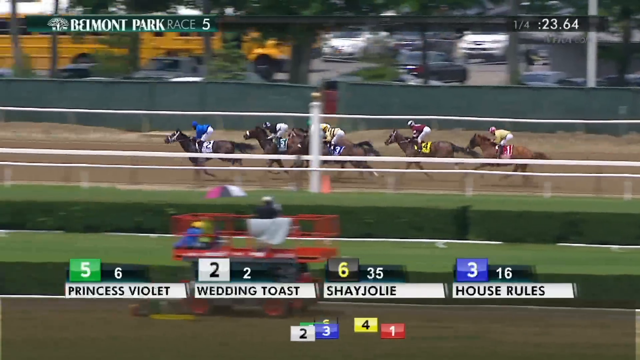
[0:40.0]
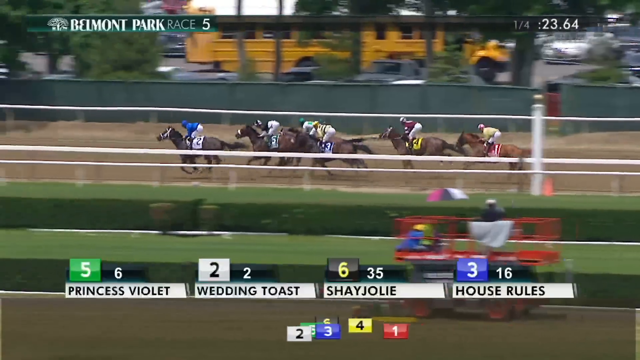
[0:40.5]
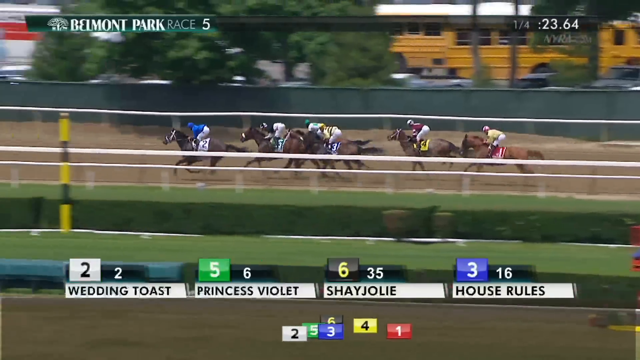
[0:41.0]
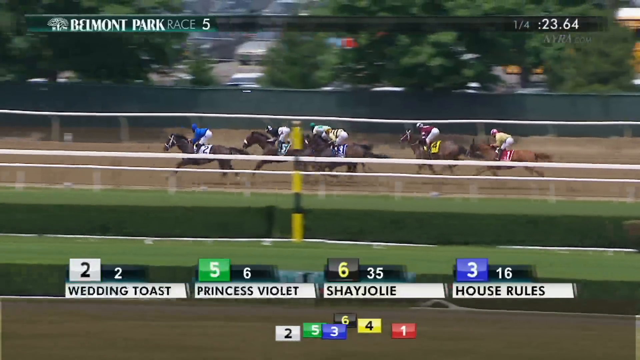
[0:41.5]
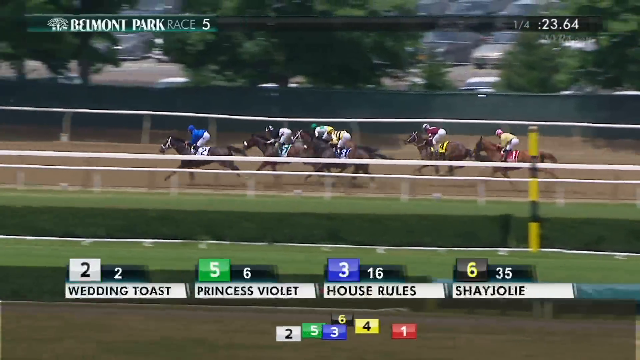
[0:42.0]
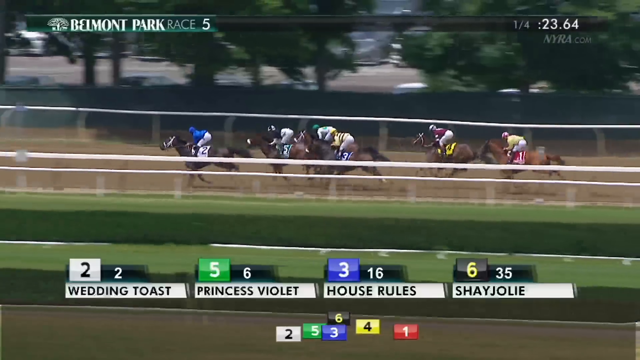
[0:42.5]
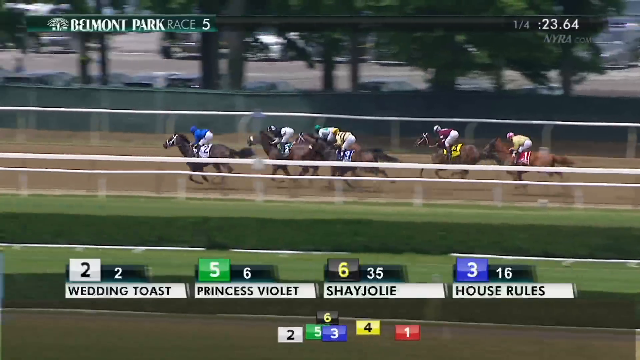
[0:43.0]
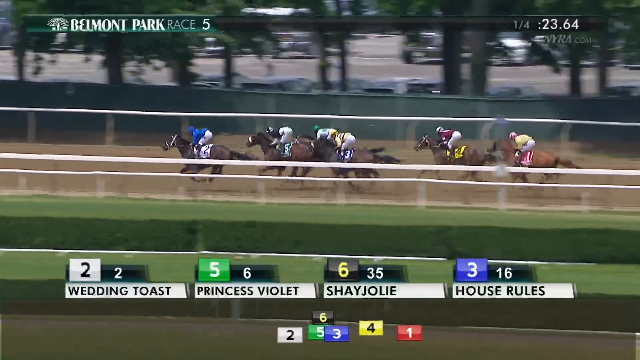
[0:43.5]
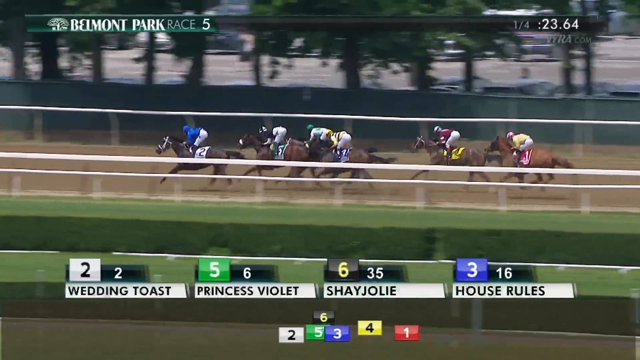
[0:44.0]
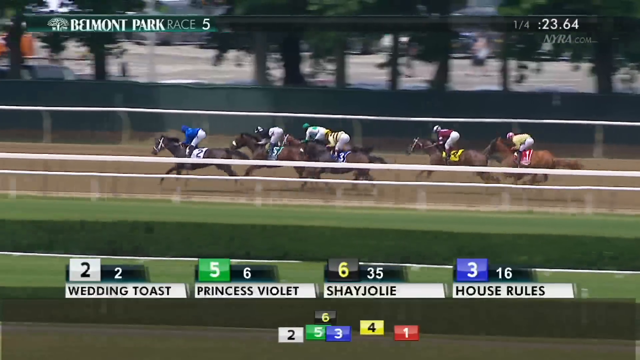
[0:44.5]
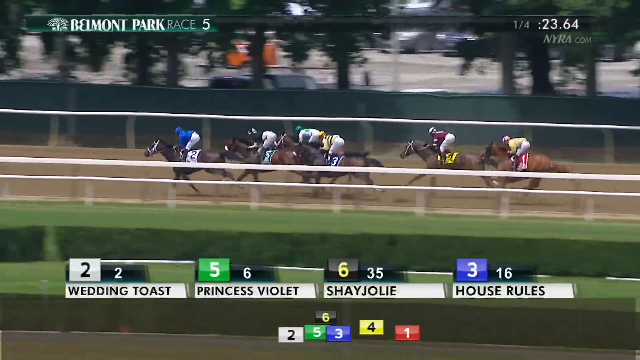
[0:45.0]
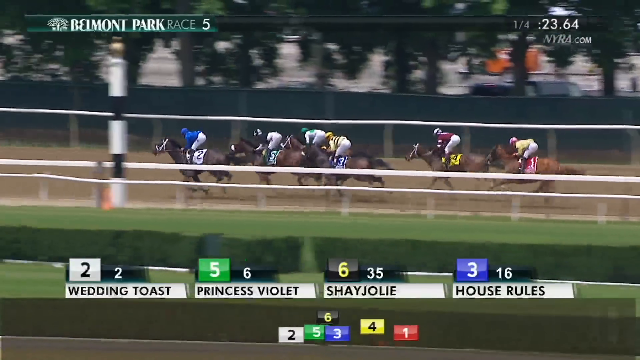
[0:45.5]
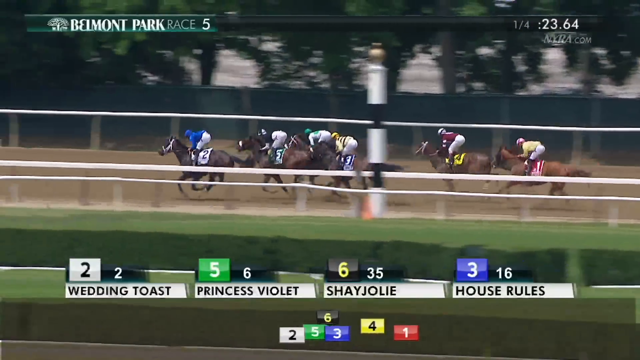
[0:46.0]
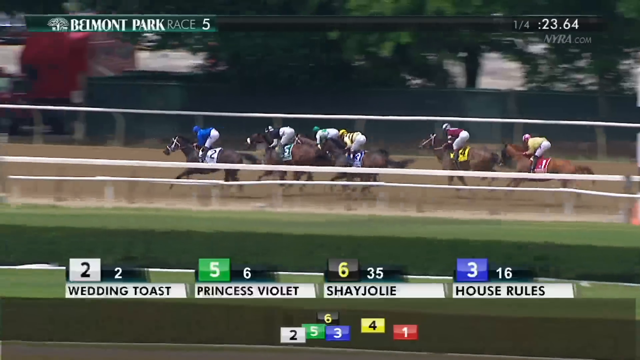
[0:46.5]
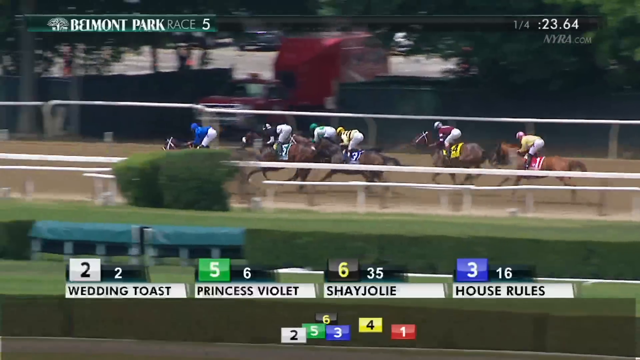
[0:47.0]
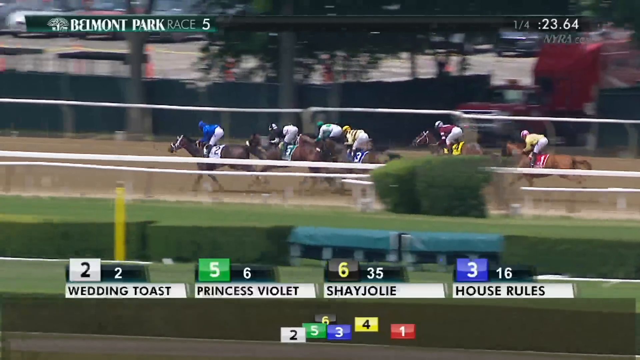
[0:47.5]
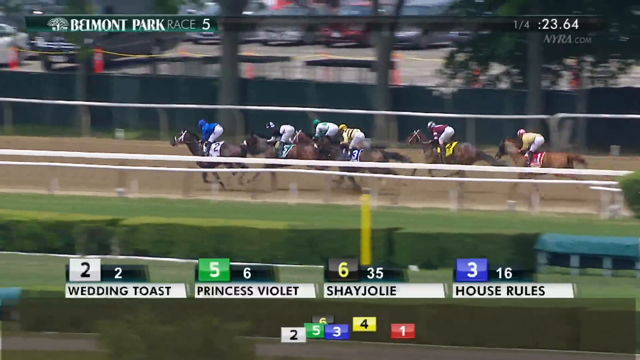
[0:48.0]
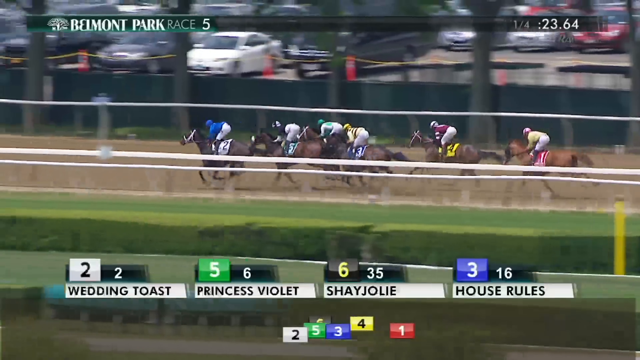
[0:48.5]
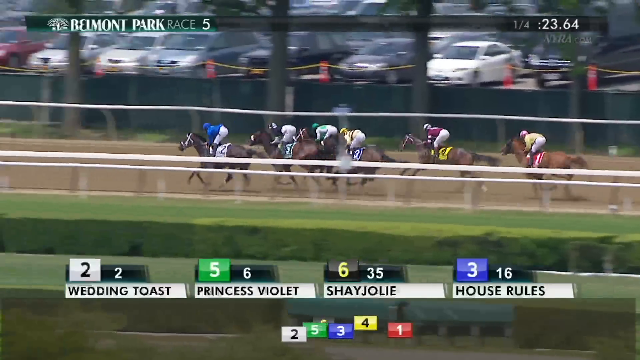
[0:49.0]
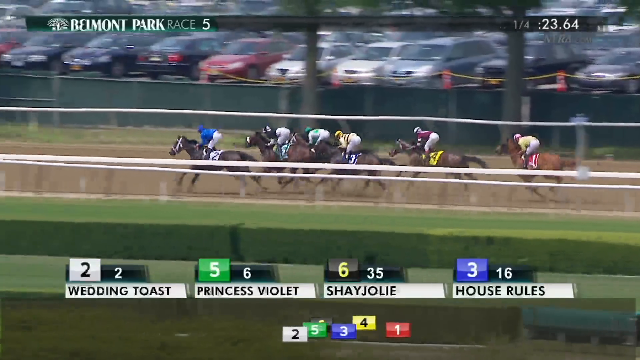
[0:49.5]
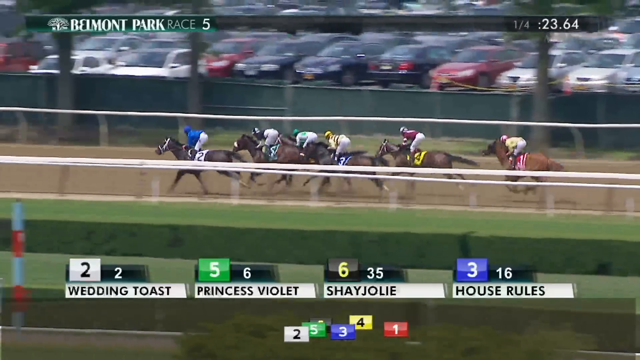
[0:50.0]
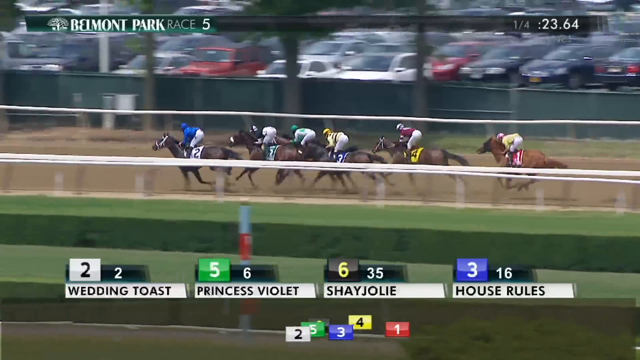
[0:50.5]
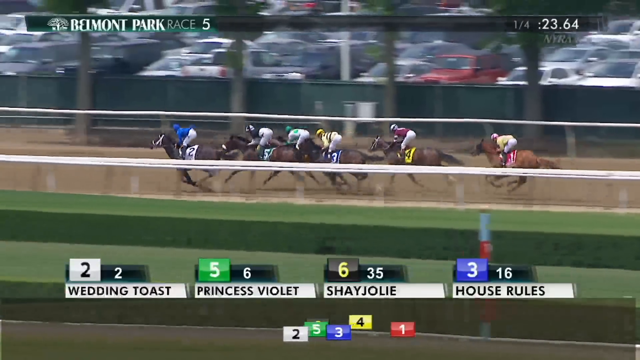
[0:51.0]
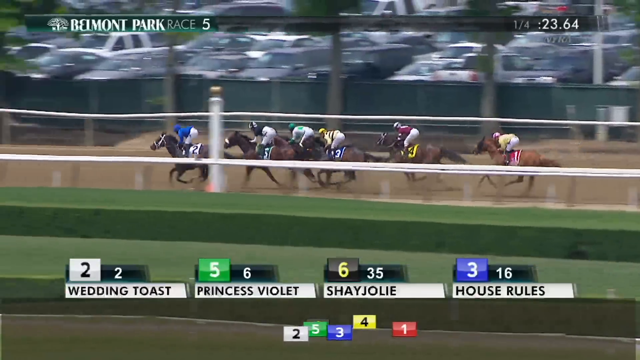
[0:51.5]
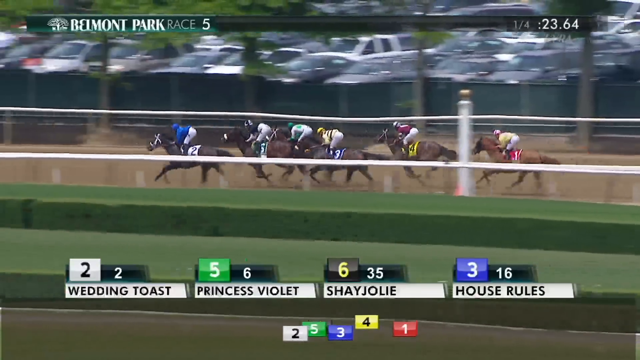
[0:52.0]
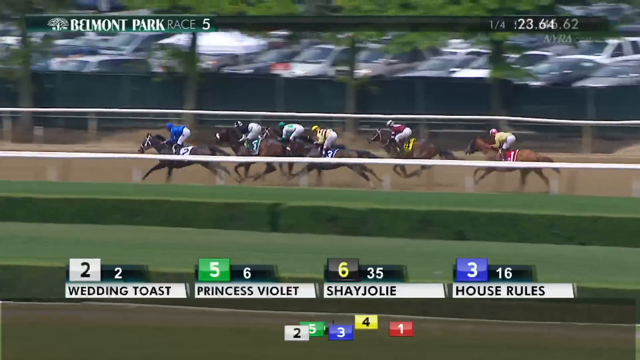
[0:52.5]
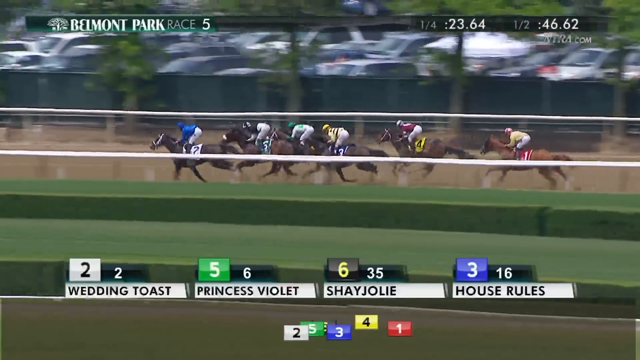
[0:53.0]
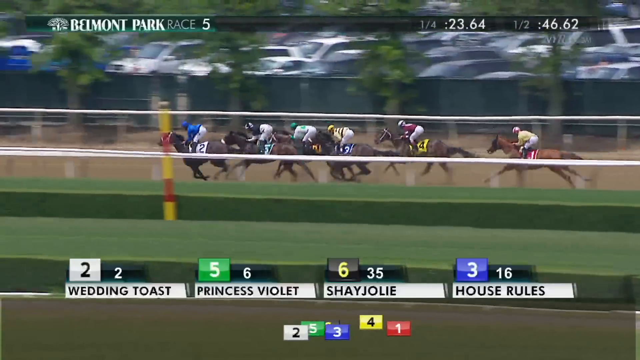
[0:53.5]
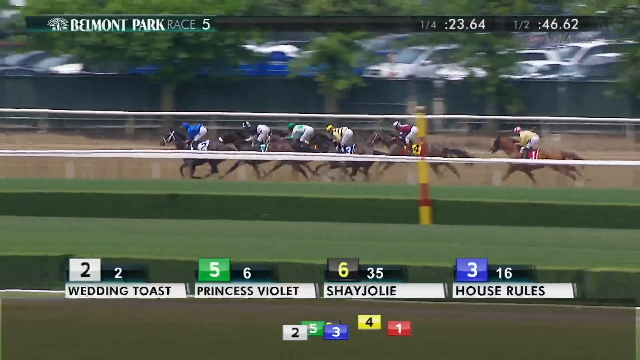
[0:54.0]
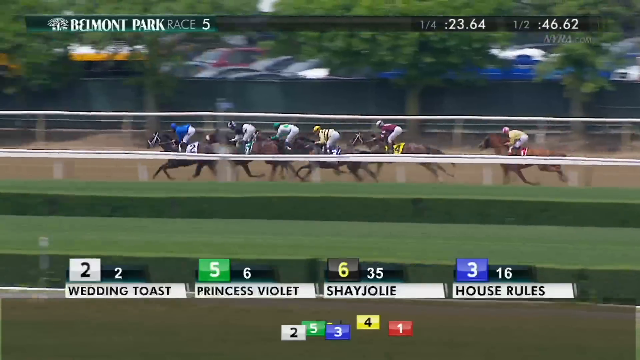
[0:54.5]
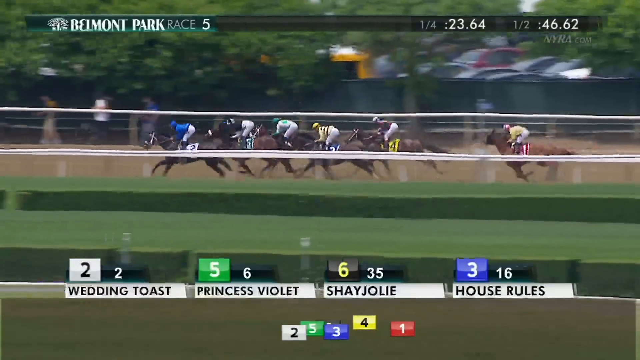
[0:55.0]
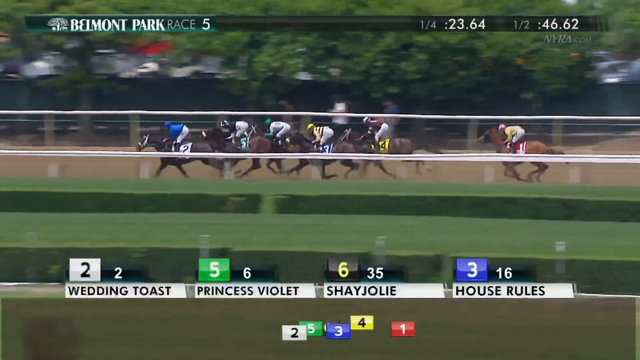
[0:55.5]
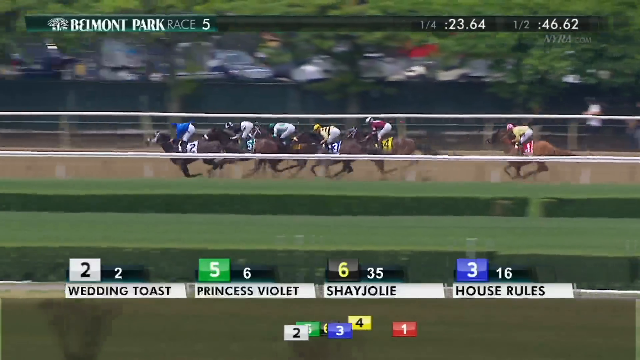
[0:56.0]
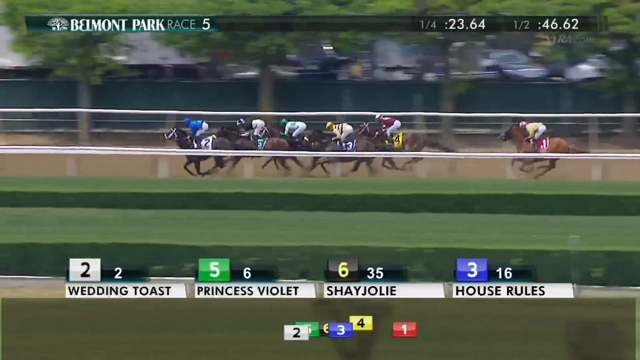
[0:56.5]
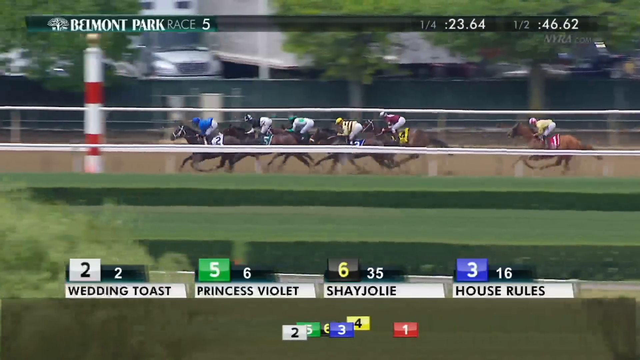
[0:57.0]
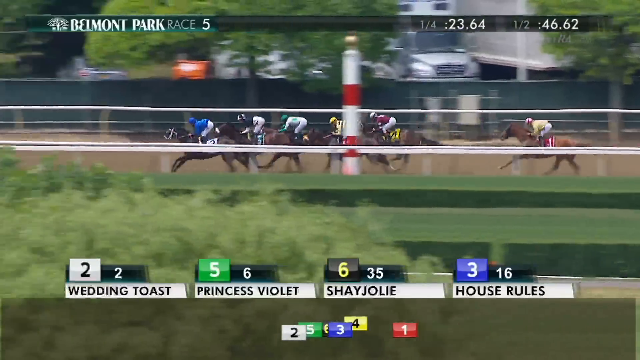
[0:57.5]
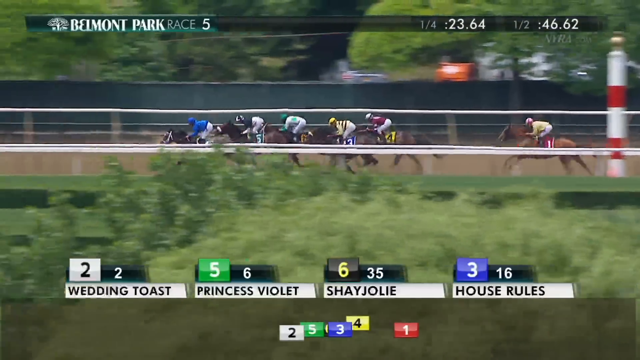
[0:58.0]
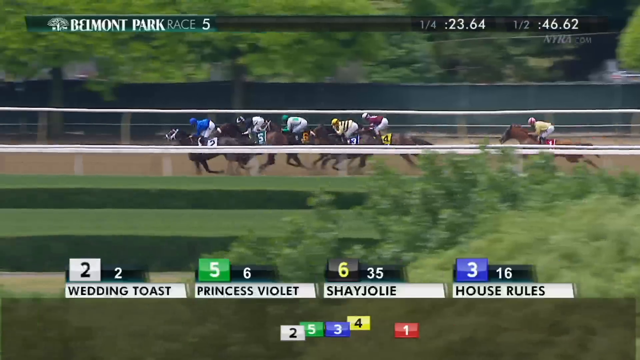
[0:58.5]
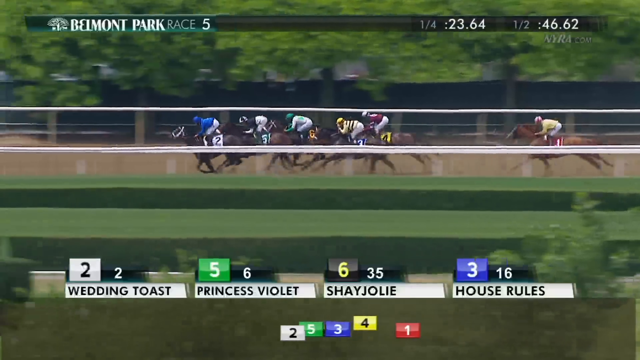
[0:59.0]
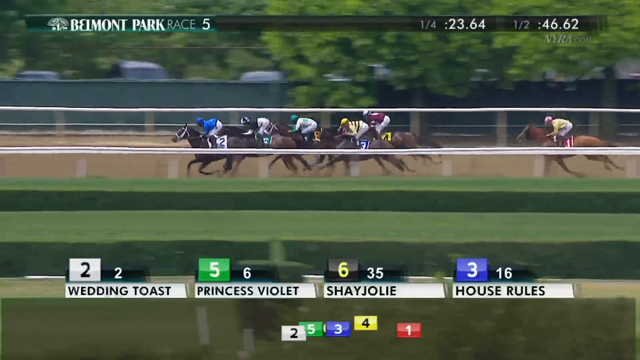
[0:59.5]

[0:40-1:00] The horses open up slightly in the backstretch, with Wedding Toast holding the lead as they move into the second turn at Belmont. Horse number two opens up a full length on numbers five and thirty-five, and horse number three is in fourth place as they head away from the camera toward the end of the backstretch and the turn back to the finish line. Number two is still ahead by a length, and number thirty-five is threatening. Number three's lead turns into just three-quarters of a length. The predominant colors are yellow, green, white and tan, and the track is dirt. The camera is positioned in the stands, so the people in the stands are not visible. The elapsed time for the first quarter of the race is 23.64 seconds.